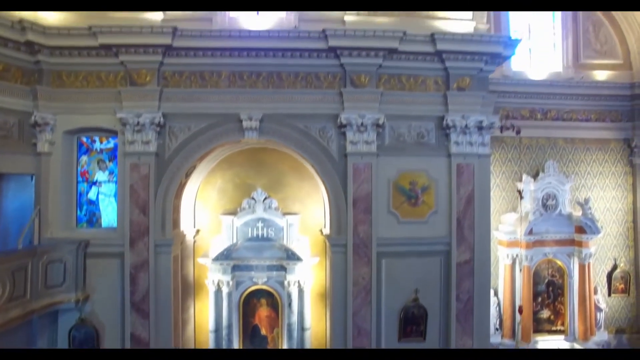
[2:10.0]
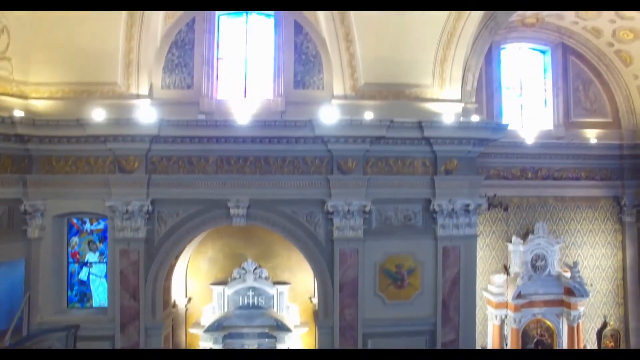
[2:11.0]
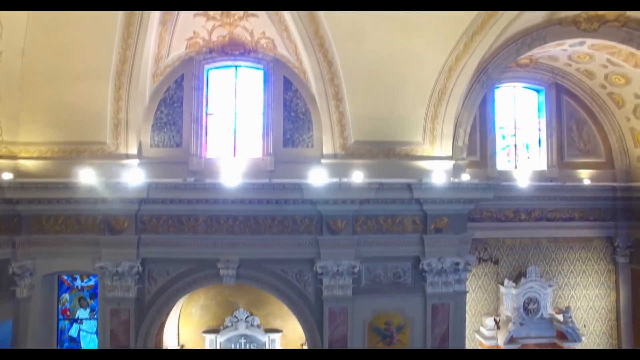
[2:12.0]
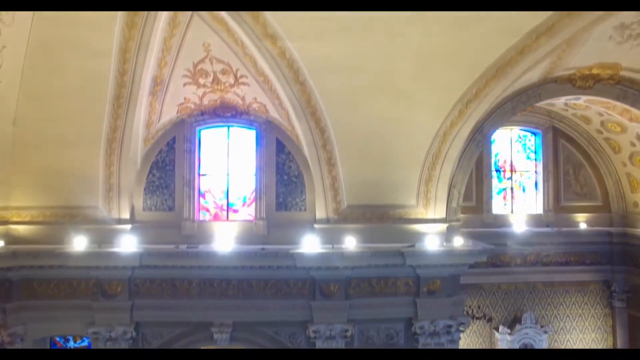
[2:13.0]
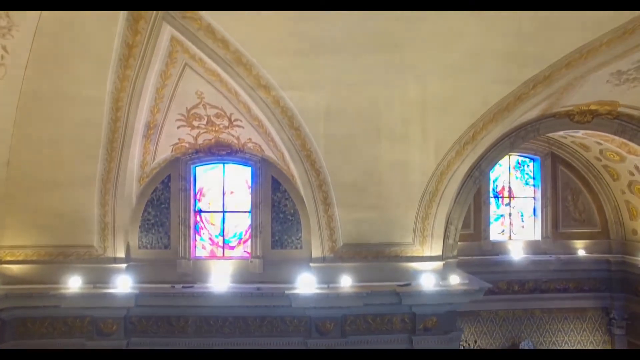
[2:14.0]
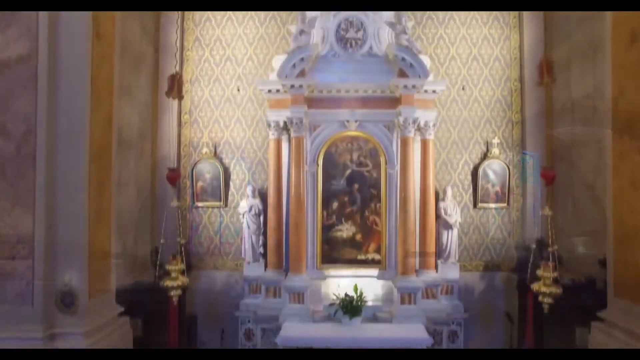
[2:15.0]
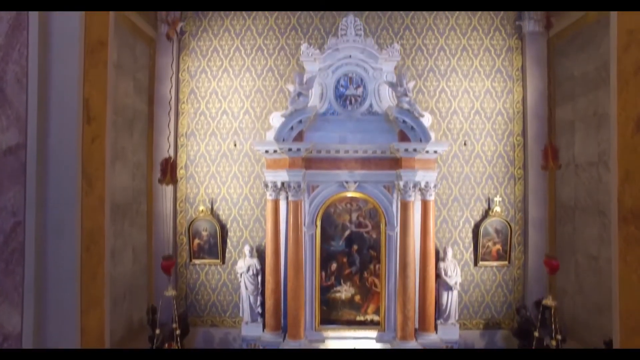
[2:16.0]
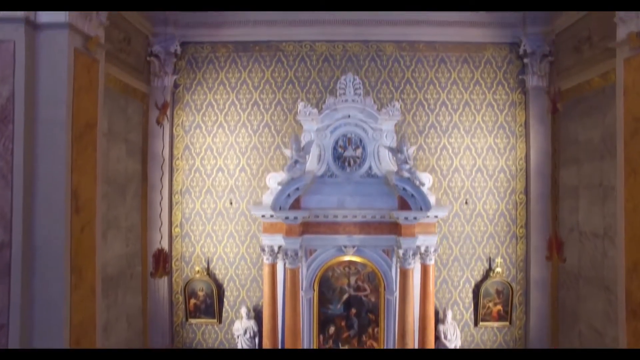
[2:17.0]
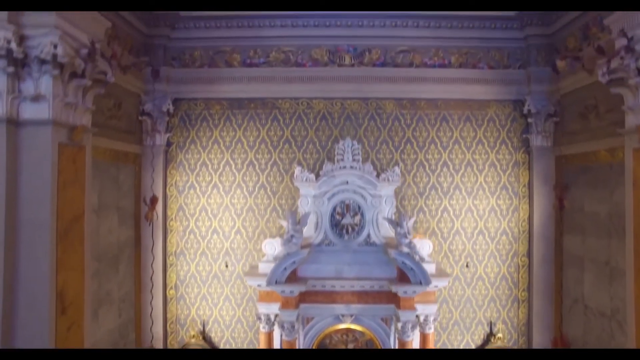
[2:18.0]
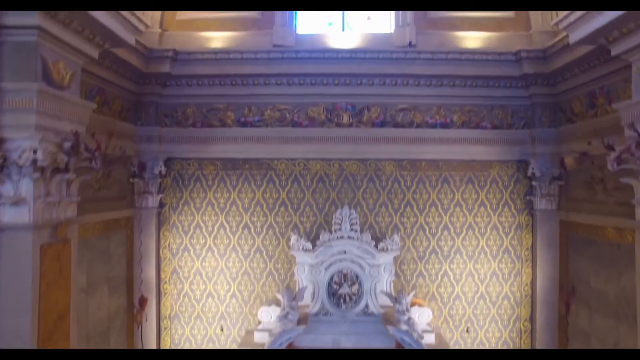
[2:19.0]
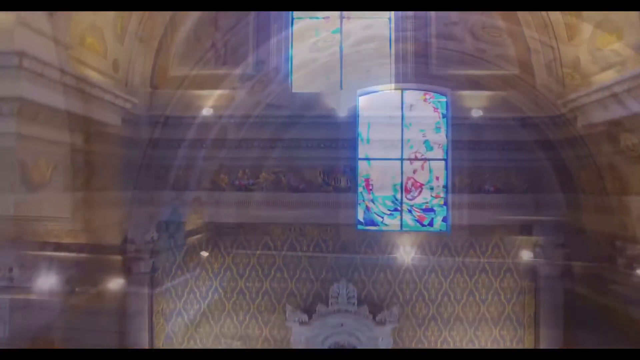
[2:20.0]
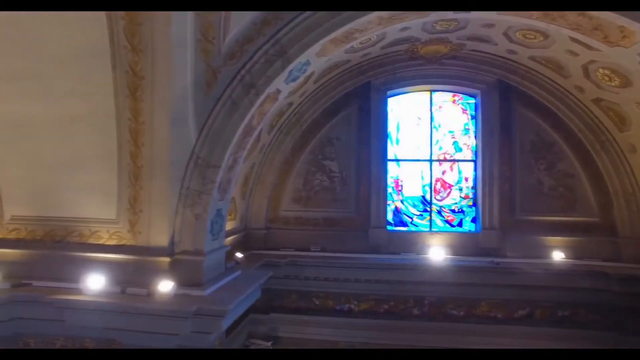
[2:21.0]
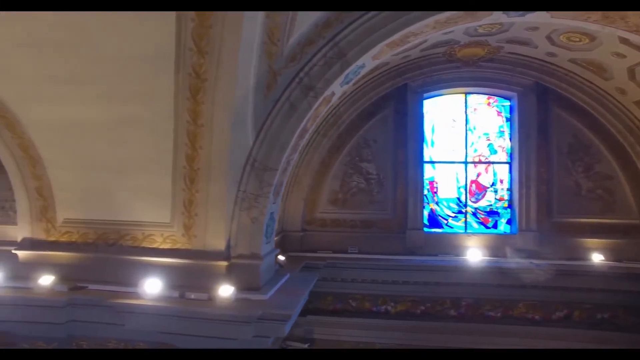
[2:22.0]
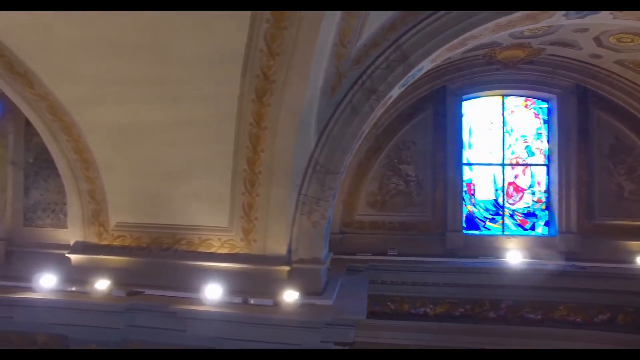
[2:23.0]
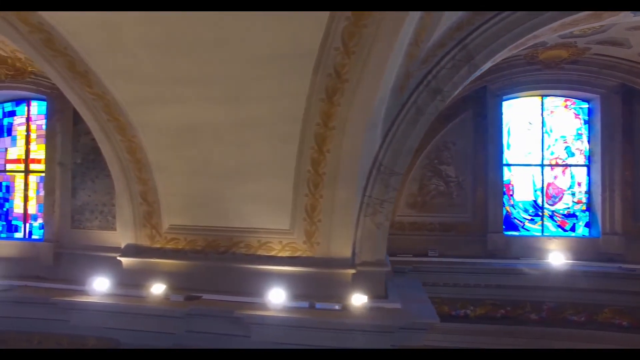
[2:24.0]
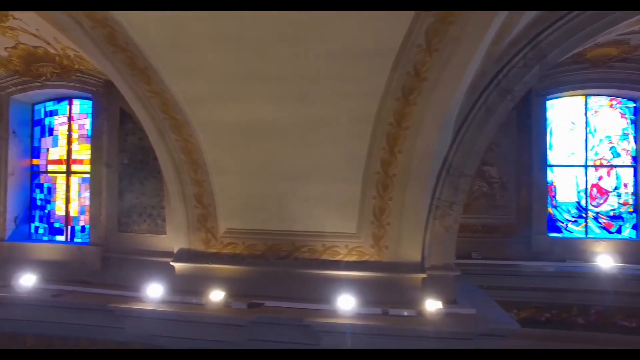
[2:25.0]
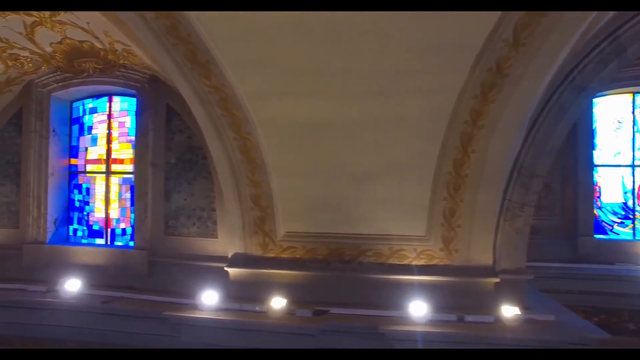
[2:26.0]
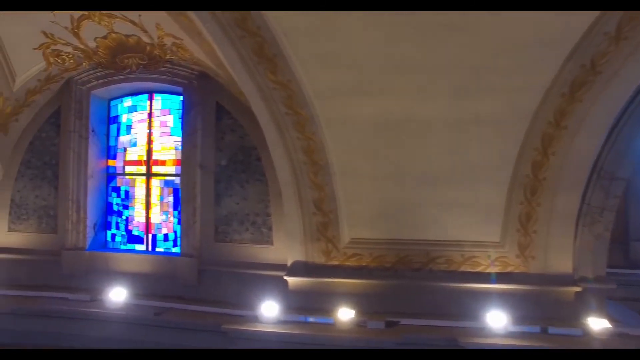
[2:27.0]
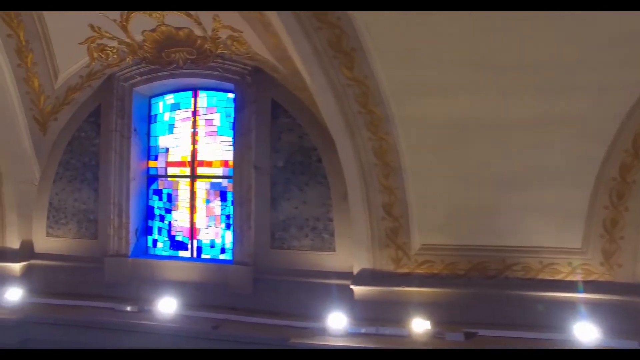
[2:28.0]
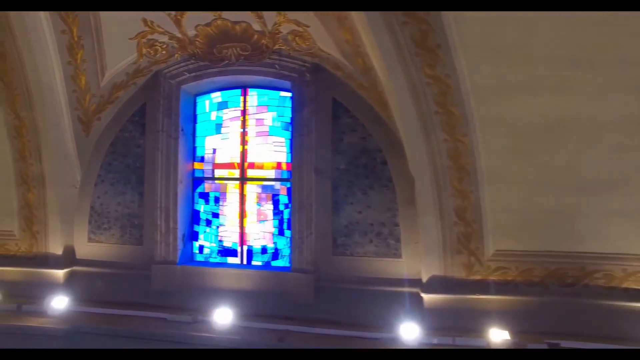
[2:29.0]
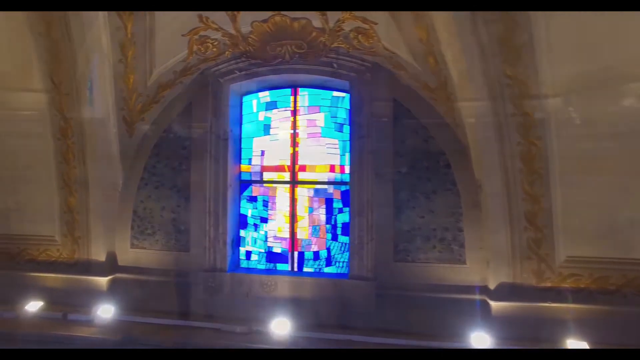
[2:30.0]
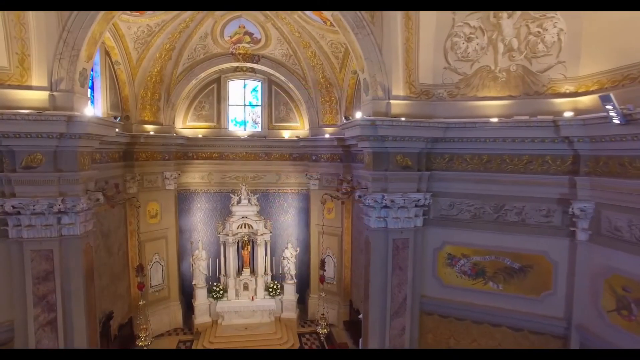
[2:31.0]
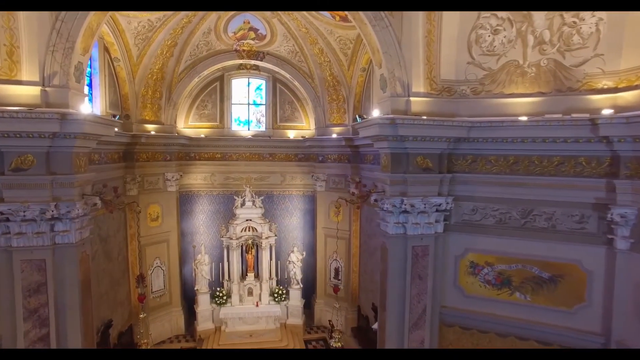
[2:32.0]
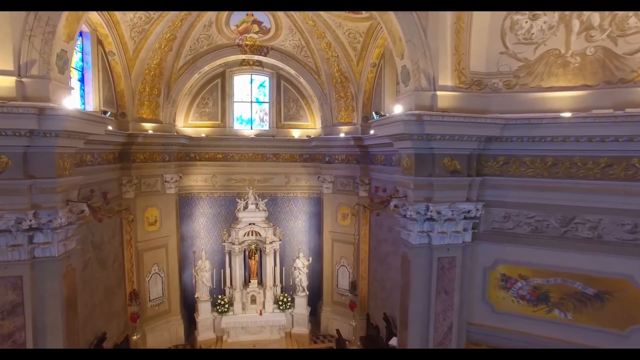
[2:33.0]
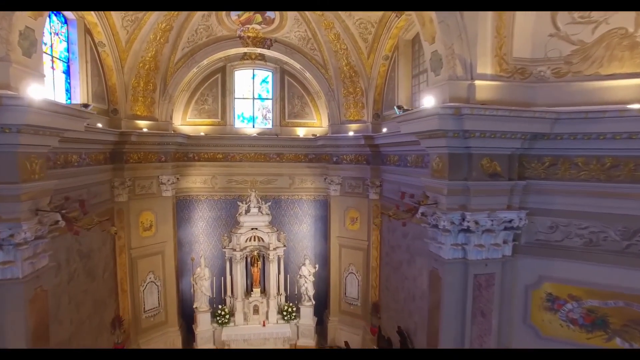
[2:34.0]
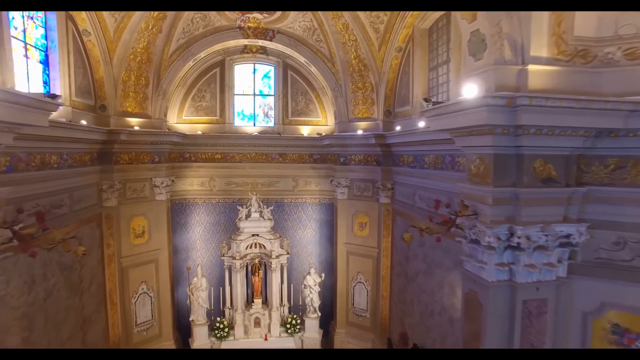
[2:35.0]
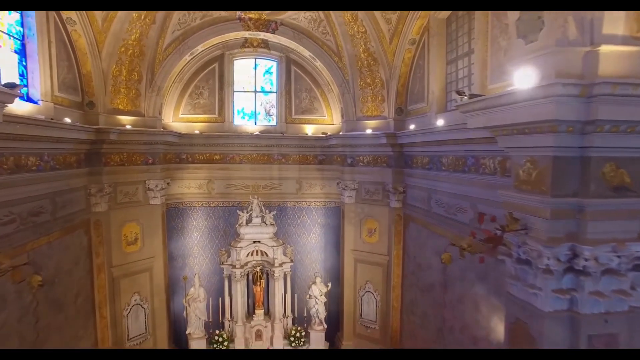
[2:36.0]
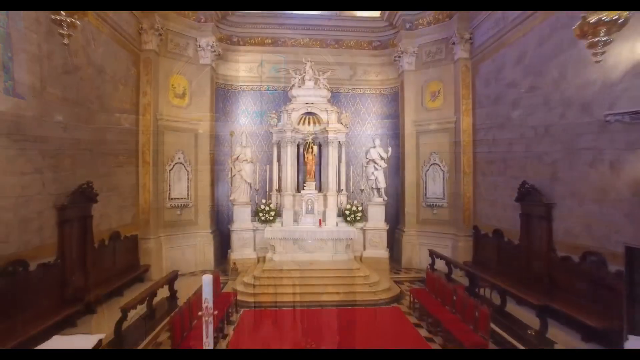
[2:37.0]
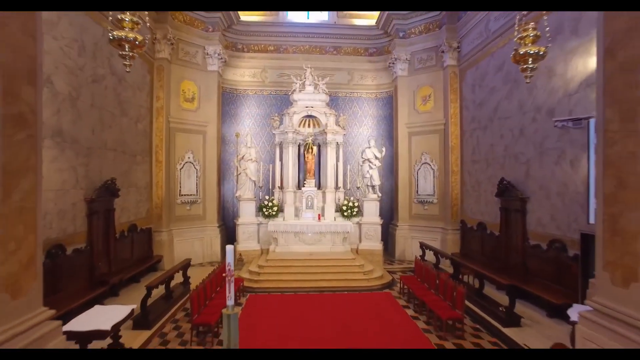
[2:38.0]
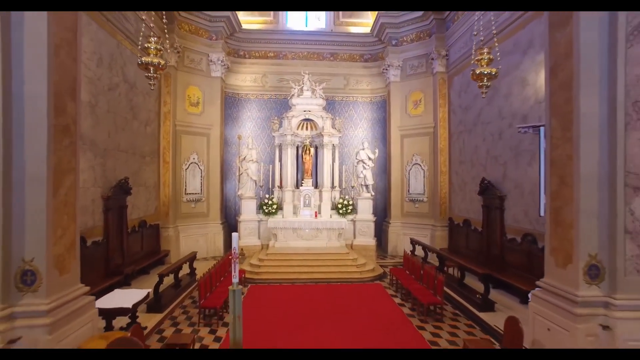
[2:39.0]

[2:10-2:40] The camera zooms wildly around the church. It starts at about mid level looking at what seems to be a side chapel, with a blue painting or stained glass with a religious motif on the left, then heads toward the windows on the upper floor, which let in light. The view changes abruptly back toward the altar, then changes again, going round and round. It slows somewhat, panning along the stained glass windows at the top, then changes again to the altar with pillars on its side. The camera moves rapidly backwards and returns to the top, flicking wildly from scene to scene and zooming in and out, scarcely allowing a look at anything.